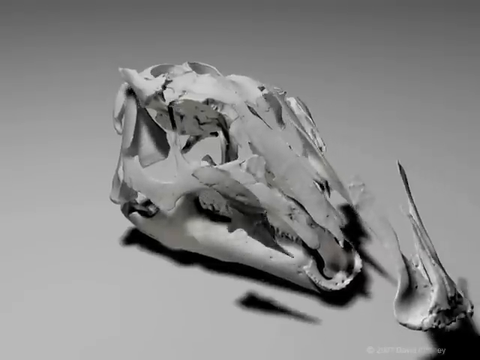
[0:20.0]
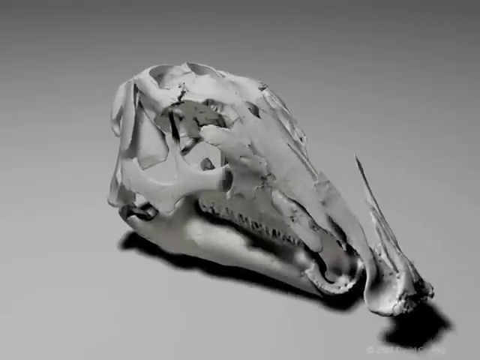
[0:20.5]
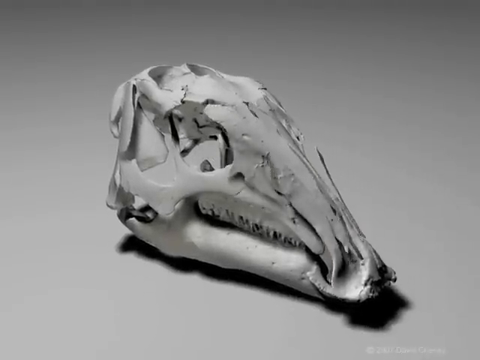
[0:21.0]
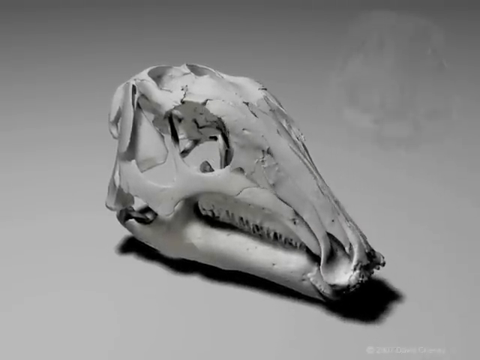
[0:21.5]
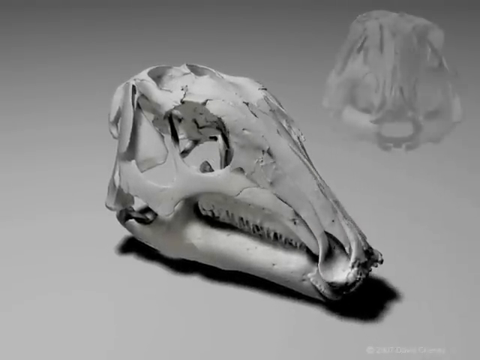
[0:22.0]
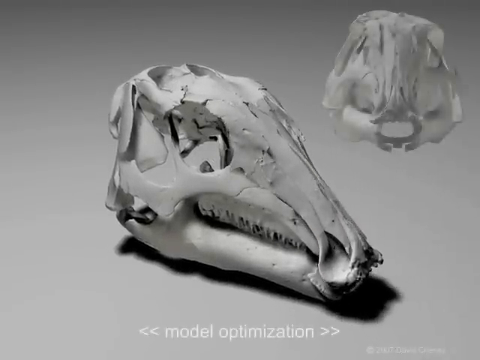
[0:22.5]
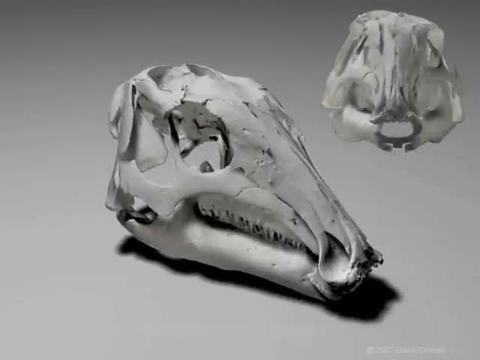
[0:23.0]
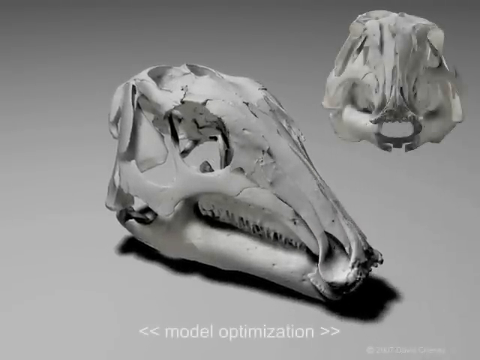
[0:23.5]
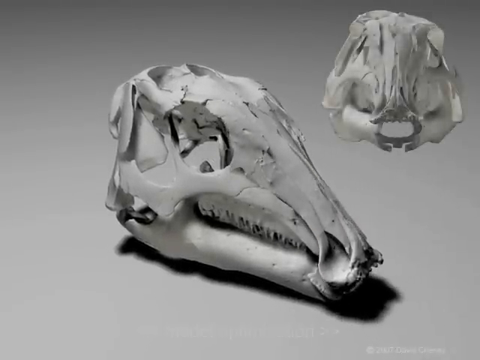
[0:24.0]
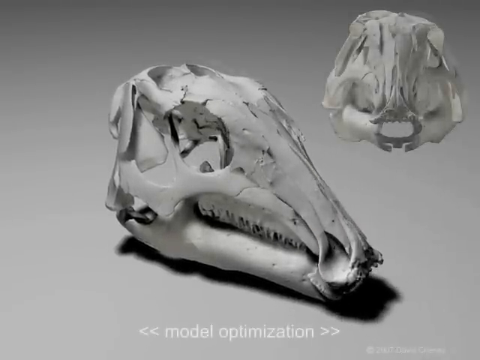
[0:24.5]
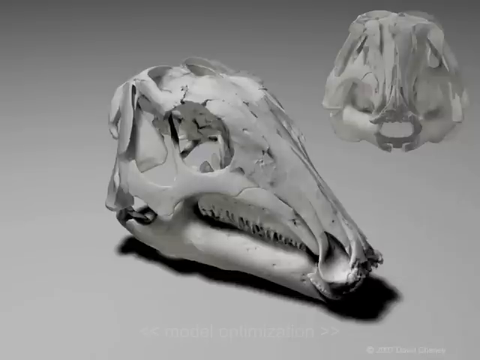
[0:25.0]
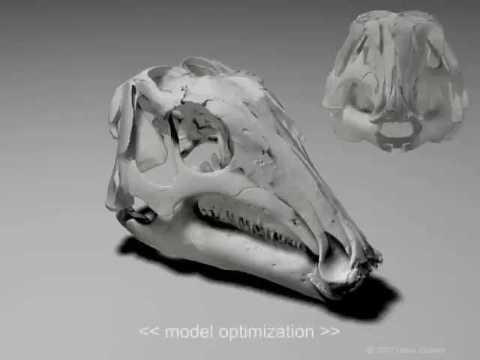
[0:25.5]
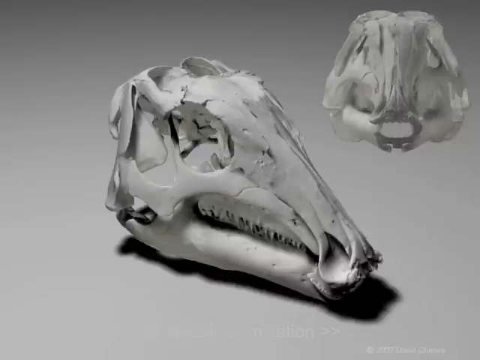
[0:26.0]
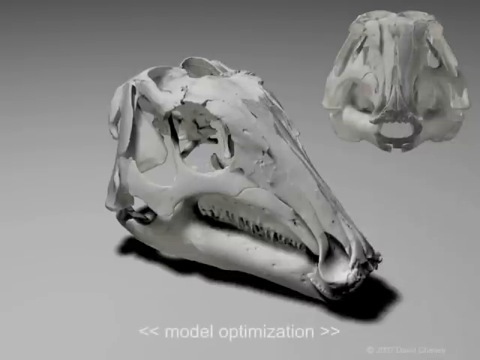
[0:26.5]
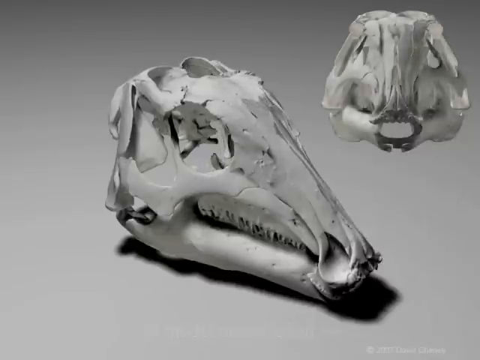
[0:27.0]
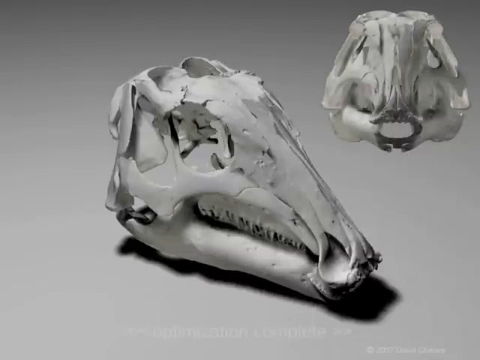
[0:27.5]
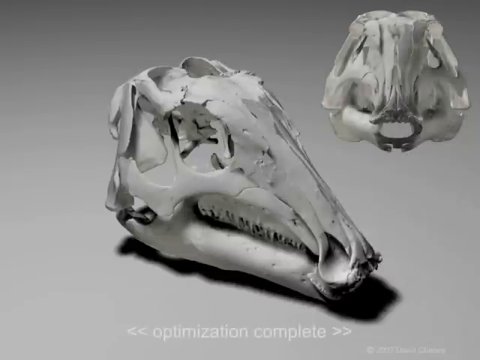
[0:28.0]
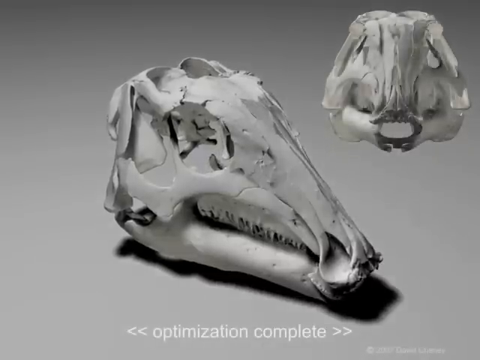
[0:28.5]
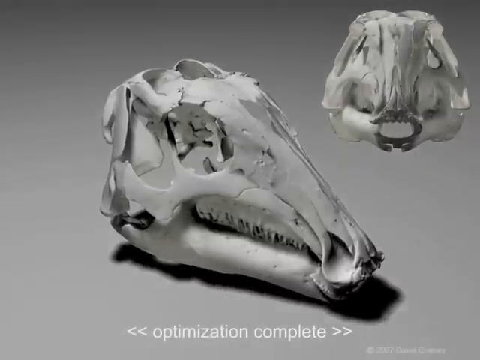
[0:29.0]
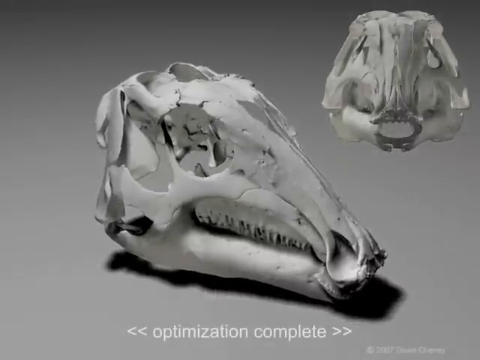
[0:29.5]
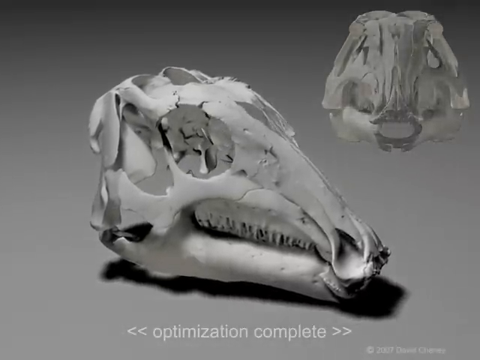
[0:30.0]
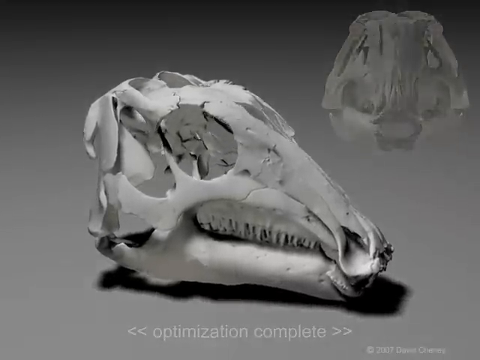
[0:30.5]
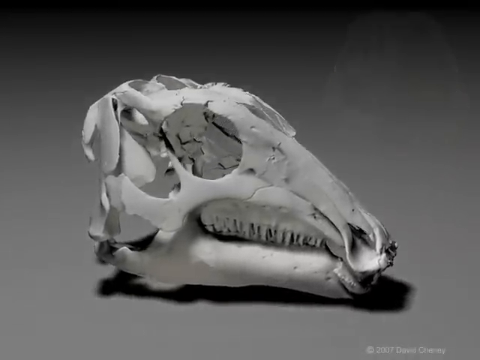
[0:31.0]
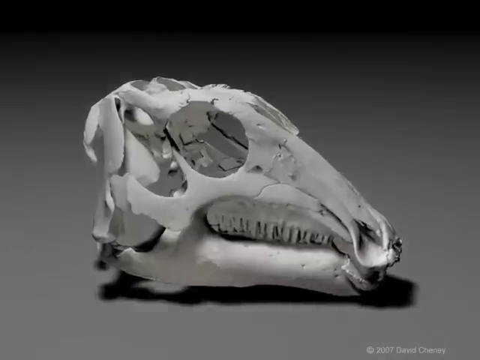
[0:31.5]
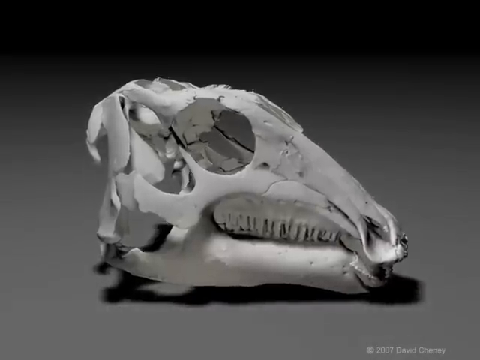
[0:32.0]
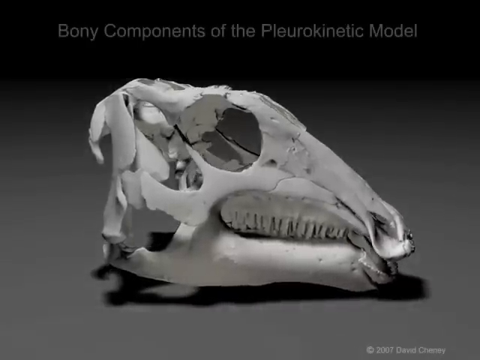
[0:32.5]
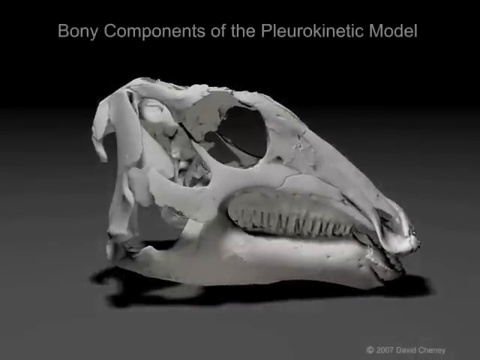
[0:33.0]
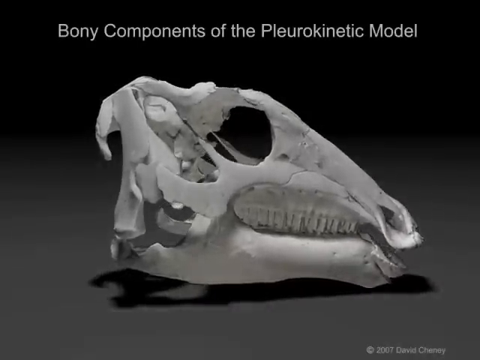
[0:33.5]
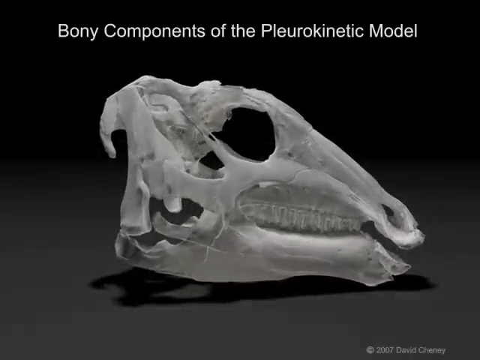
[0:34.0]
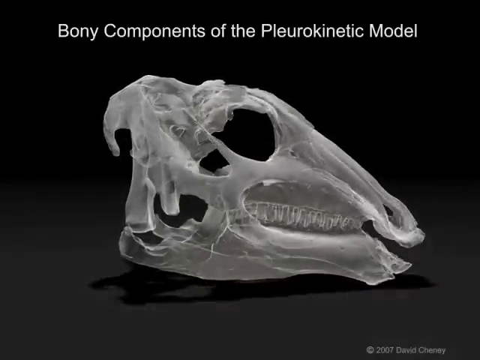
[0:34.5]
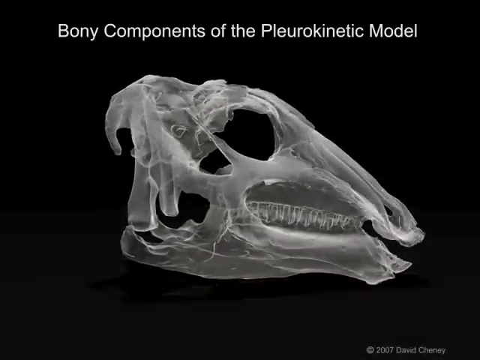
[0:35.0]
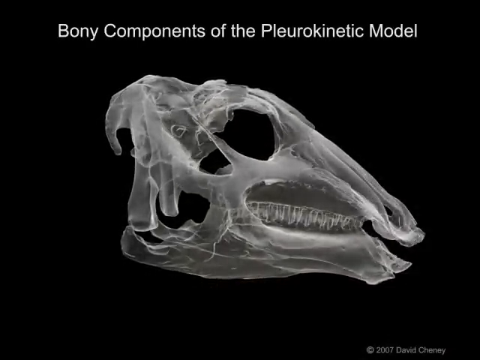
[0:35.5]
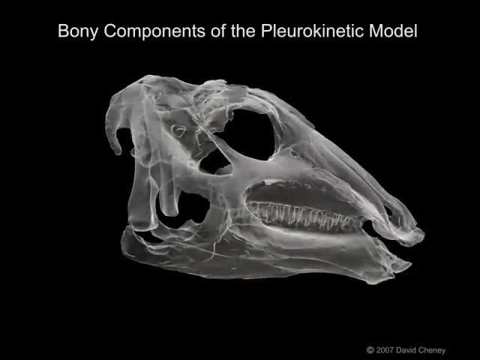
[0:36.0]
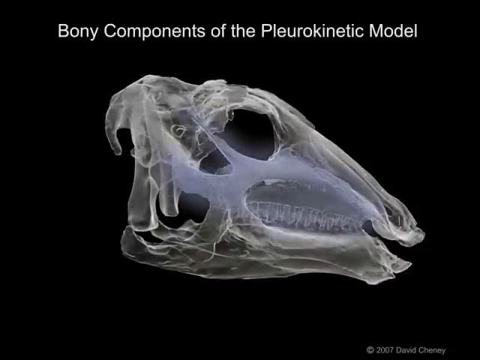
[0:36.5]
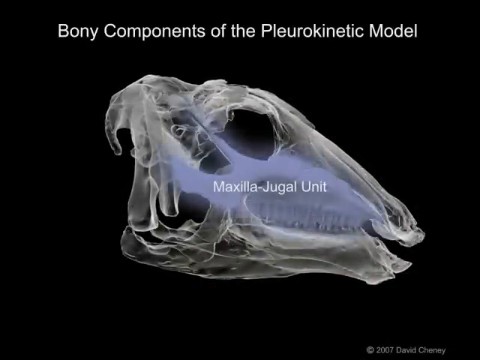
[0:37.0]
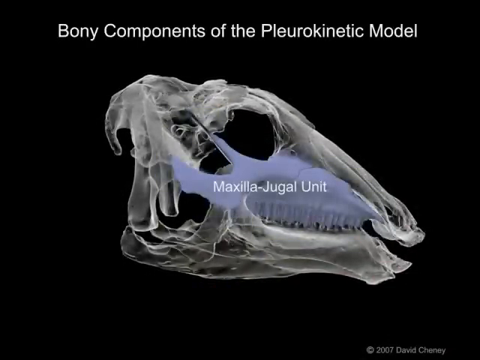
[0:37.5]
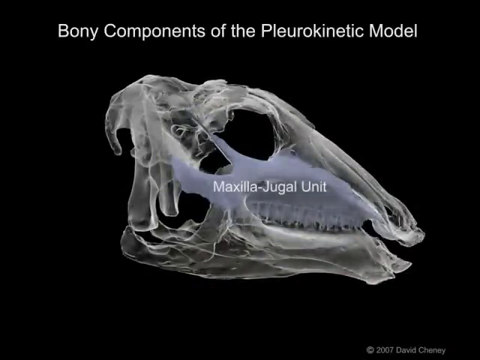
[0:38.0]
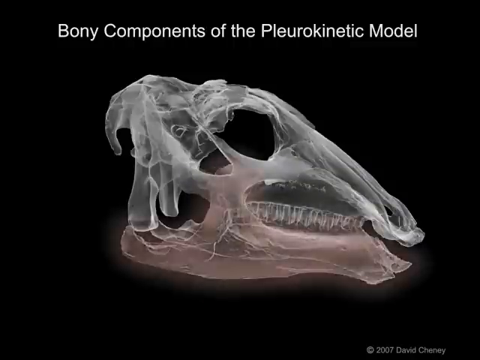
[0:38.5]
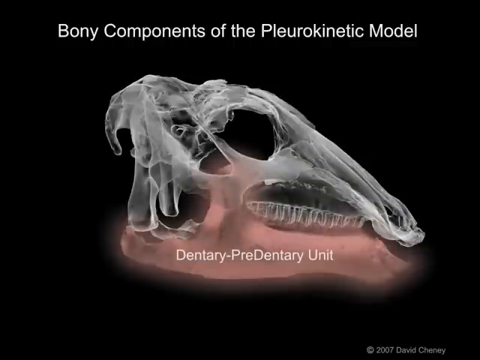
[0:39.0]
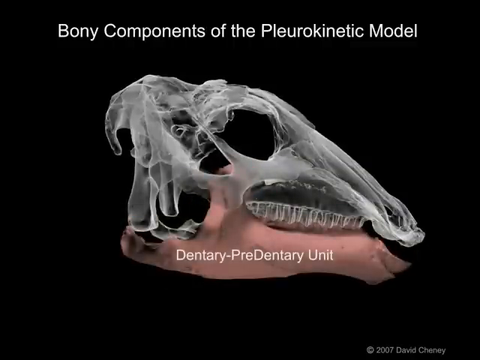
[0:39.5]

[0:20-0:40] Most of the dinosaur skull is now put together, with the mouth pointing toward the lower right corner against the still-gray background; the last piece to be added is the nose area. Another image, possibly of the skull seen from behind, gives a different view in the upper right corner. The image holds for a few seconds and then rotates, and text at the bottom reads "optimization" and apparently "complete." The background then fades from gray all the way to black, and white text at the top reads "bony components of the pleurokinetic model." The skull turns toward the right, showing its right side profile. Part of the mouth, the top of the teeth, is highlighted purple and labeled "maxilla-jugal unit." After the purple fades, the bottom part is highlighted red and labeled "dentary-predentary unit."